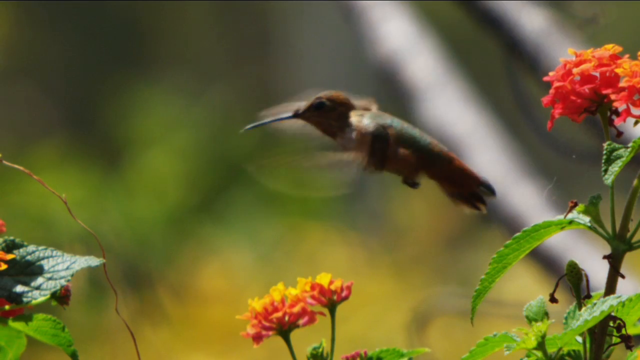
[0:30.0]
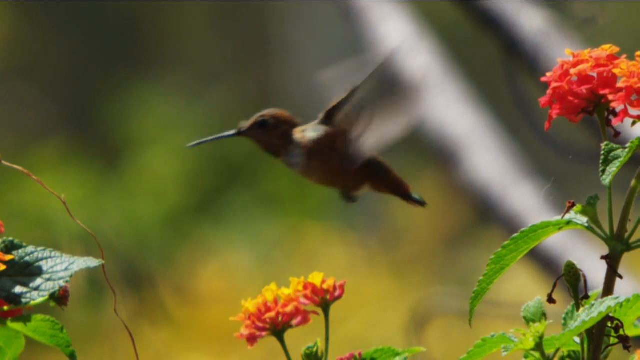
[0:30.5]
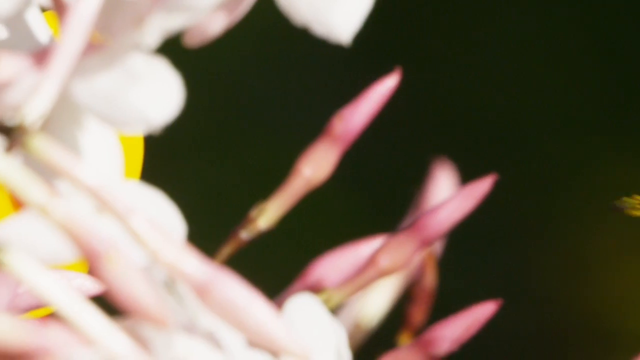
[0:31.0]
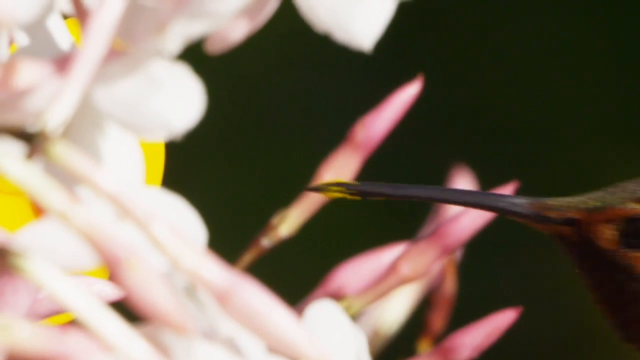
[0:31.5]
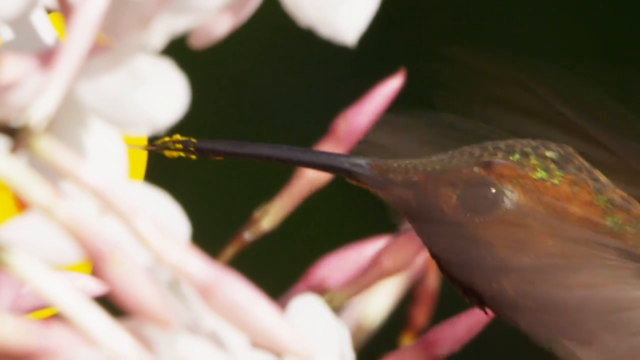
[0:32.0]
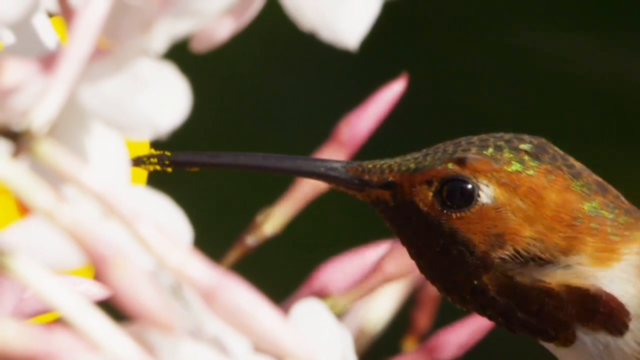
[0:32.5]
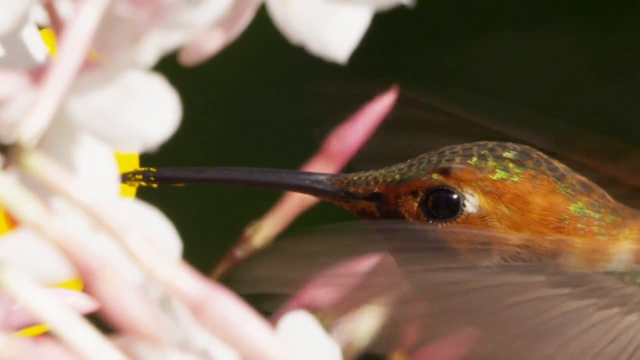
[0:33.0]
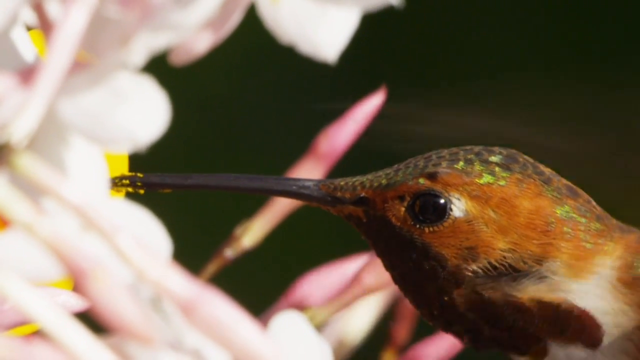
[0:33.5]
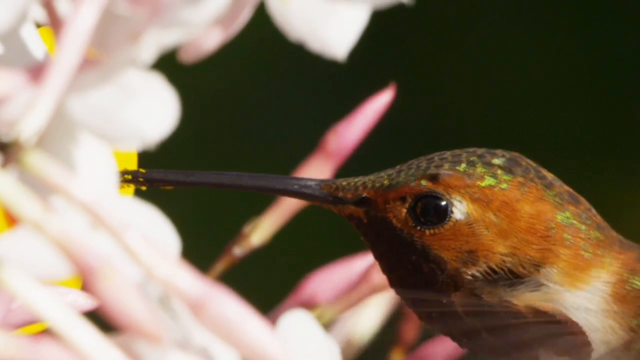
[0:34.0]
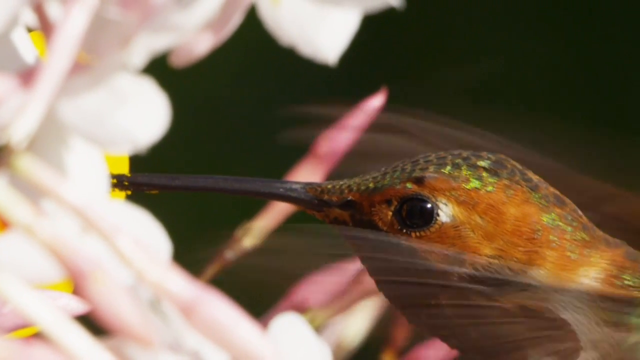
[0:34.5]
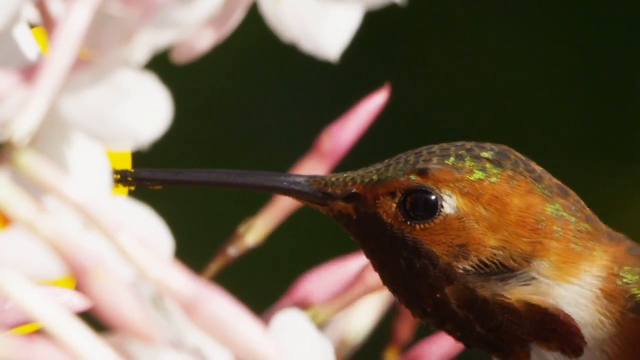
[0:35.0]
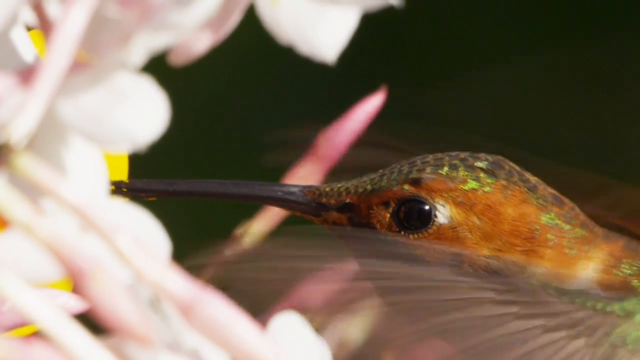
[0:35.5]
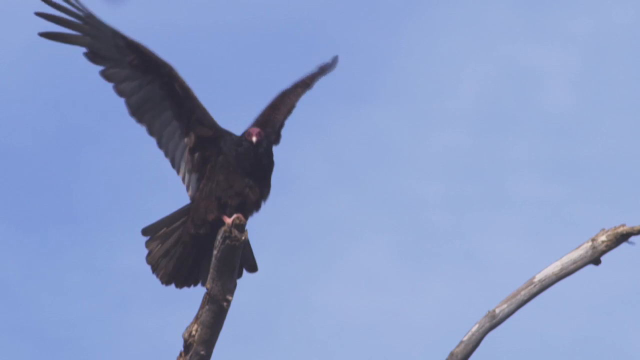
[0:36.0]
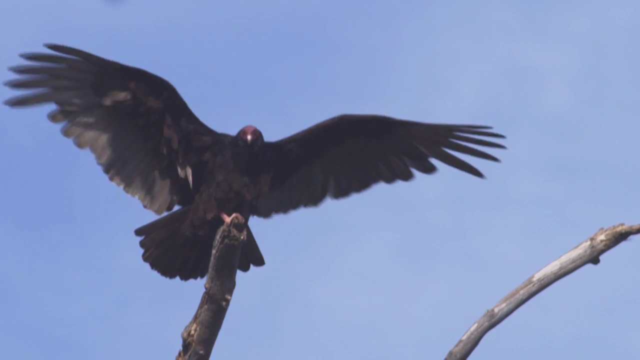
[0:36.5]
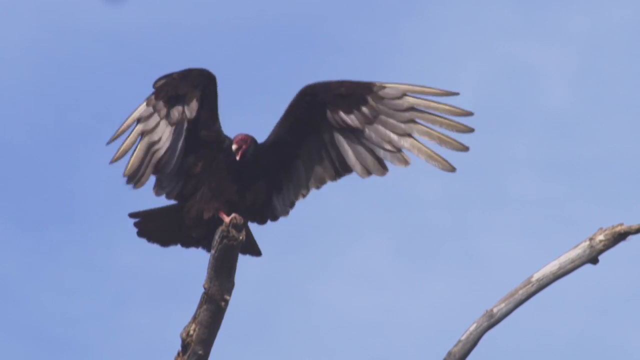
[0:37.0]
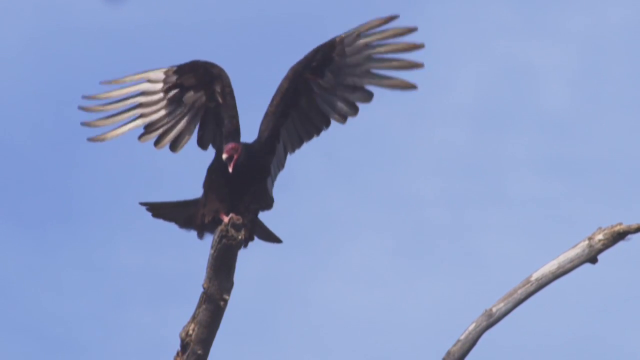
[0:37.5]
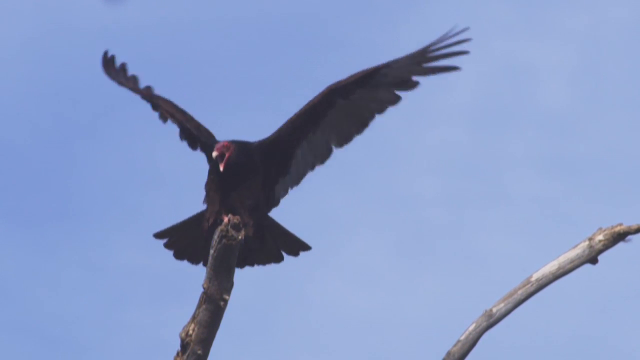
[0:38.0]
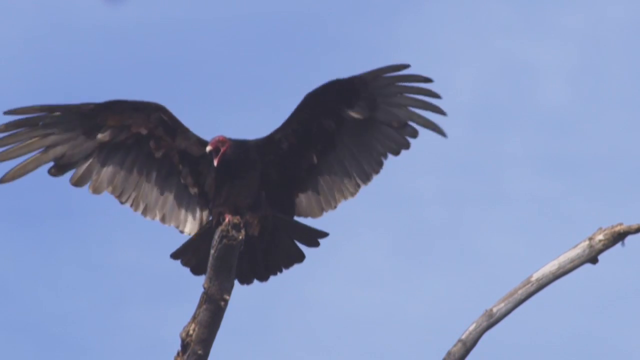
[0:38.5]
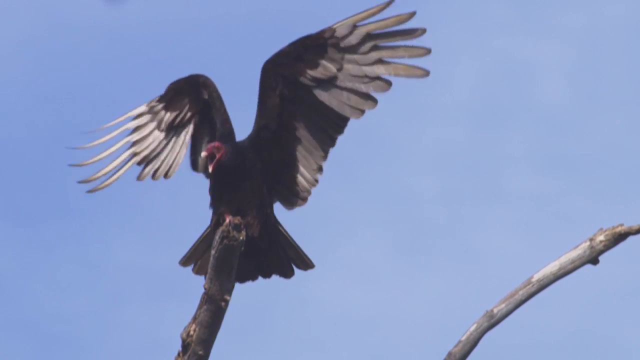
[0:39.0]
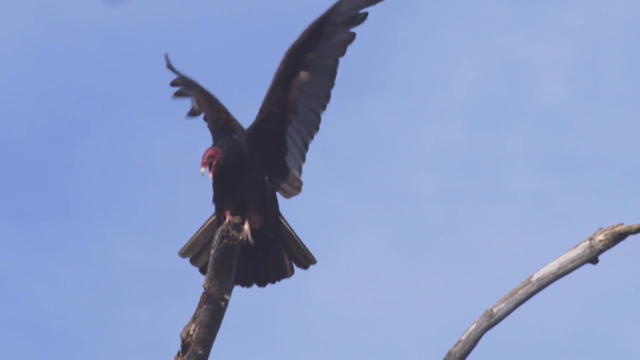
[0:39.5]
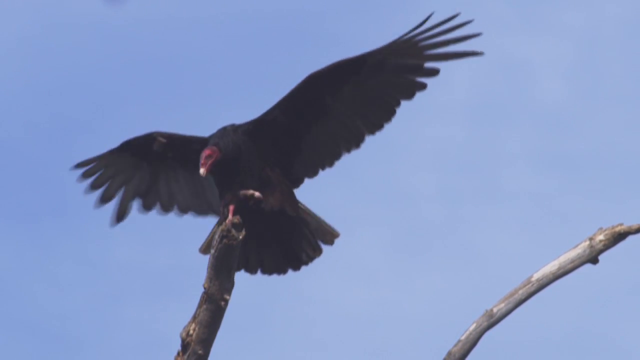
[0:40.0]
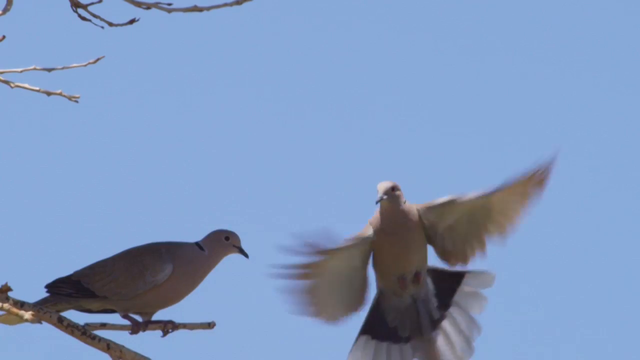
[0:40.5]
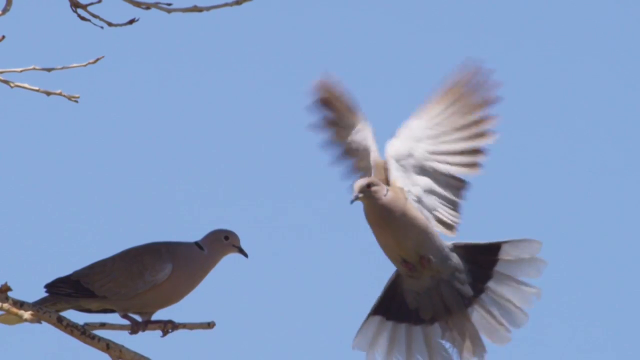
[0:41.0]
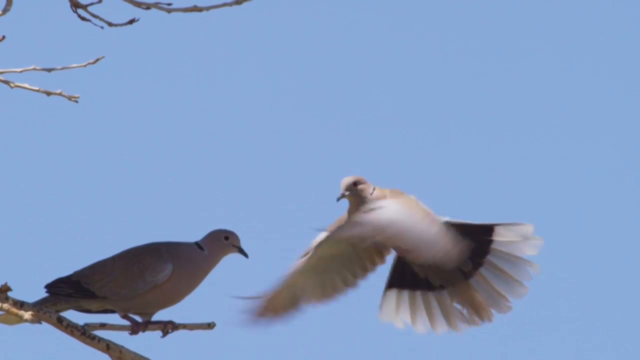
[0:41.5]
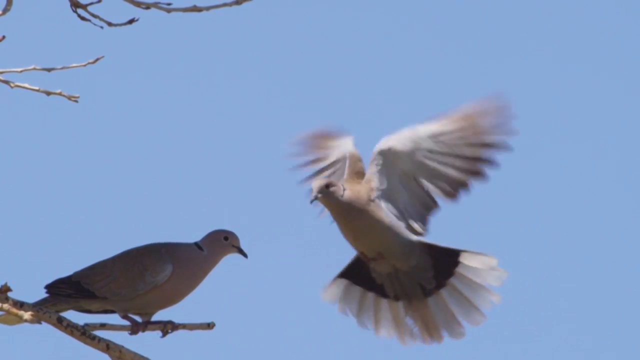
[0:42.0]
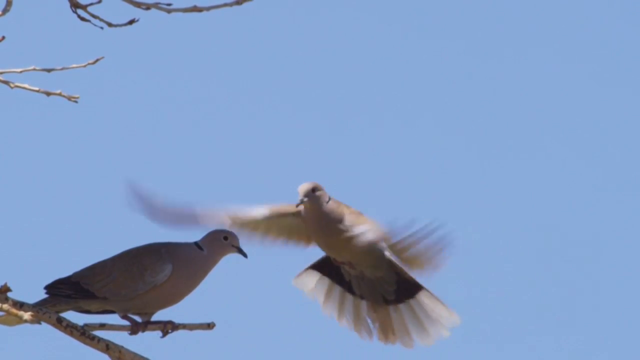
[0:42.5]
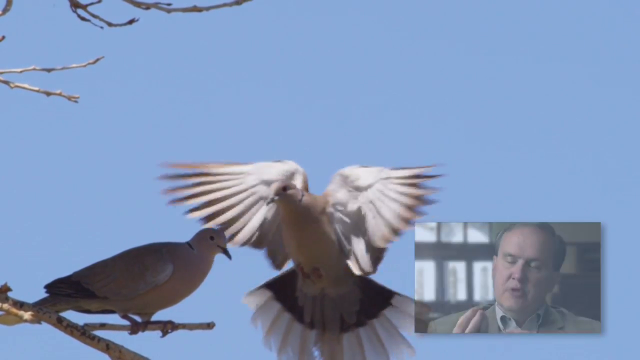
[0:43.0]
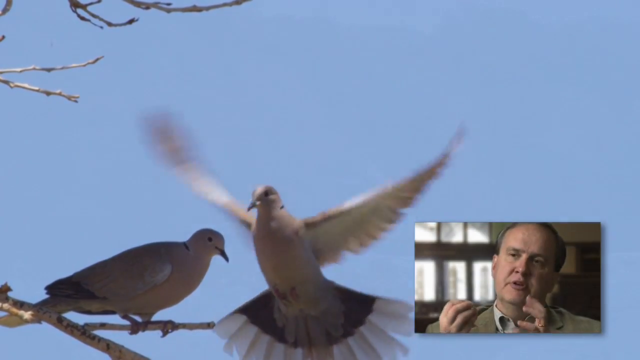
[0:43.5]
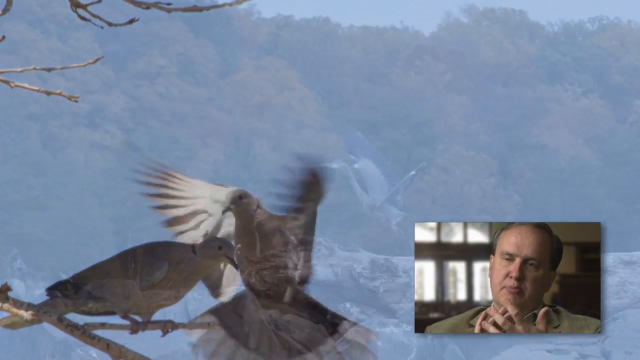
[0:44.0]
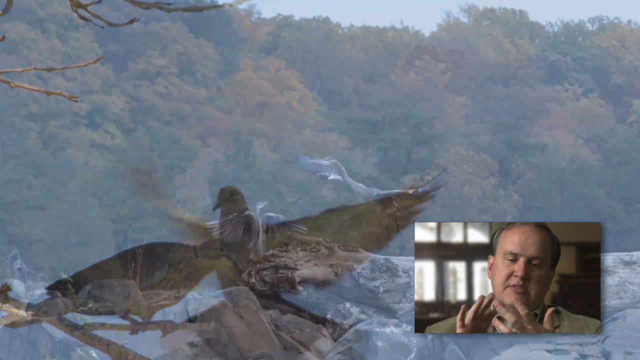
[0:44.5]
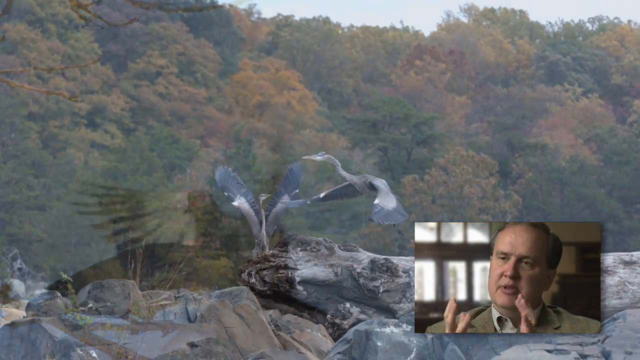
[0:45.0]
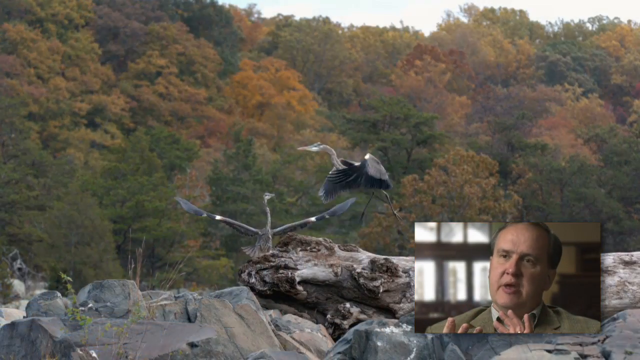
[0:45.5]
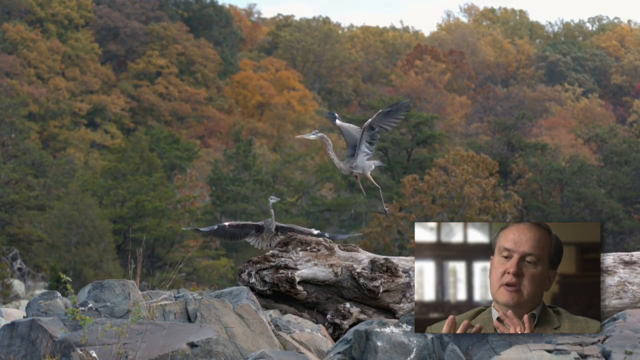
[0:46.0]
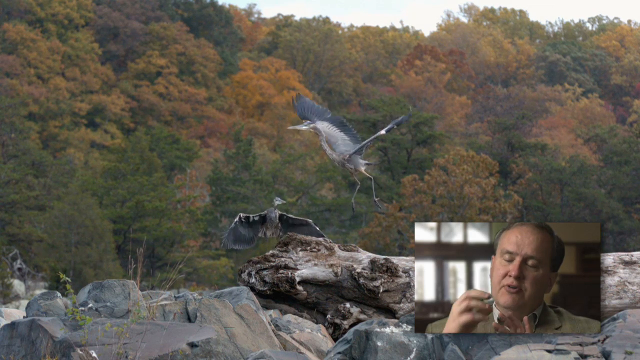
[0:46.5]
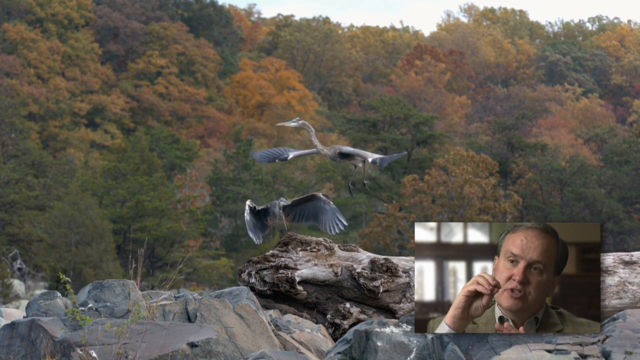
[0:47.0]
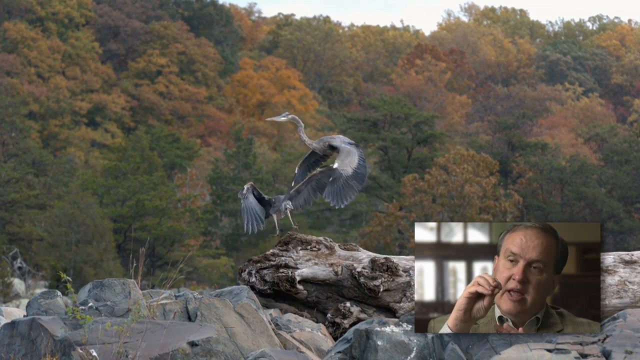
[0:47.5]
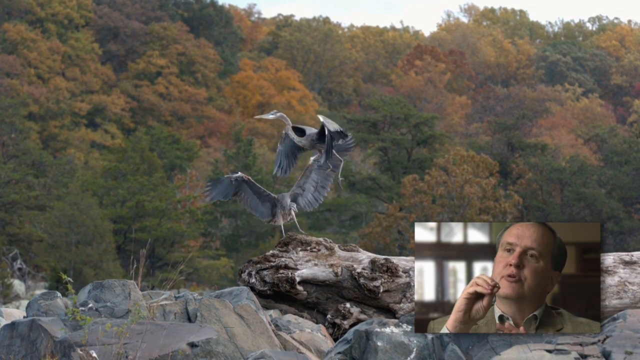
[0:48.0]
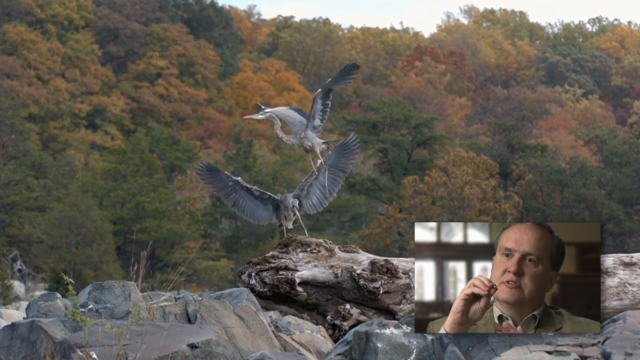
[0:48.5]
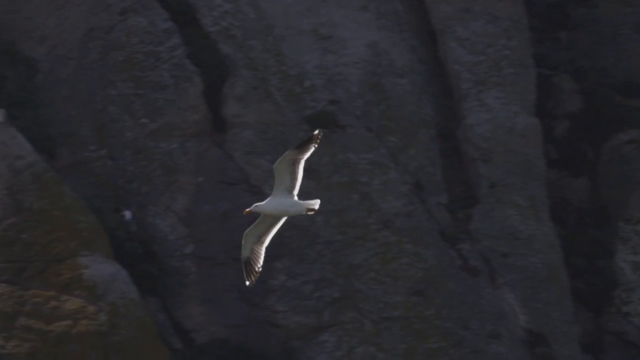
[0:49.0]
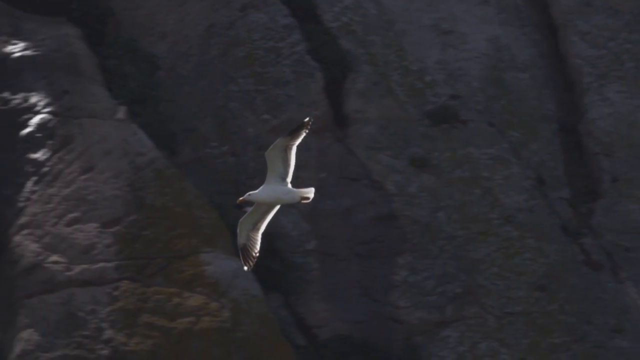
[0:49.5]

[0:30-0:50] A close-up shows the hummingbird sticking its beak into the flower to get nectar. It has tiny green feathers on top of its head, orangish, reddish and yellowish feathers on the side of its face, with some white behind that apparently running toward its back. The underside of its face and chest looks dark crimson, so it is perhaps a ruby-throated hummingbird. Its small wings flap very fast. A big bird appears, apparently a vulture rather than a bird of prey. Two doves follow: one sits quietly on a small branch while the other comes in for a landing. In the bottom right of the picture, a man talks and uses his hands as he talks; he wears a tan jacket and has a receding hairline and brown hair. Some sort of storks, it looks like, are on a big log beside what is probably water, with fall-colored trees and a few green ones in the background. Next, a white bird soars, possibly a seagull.